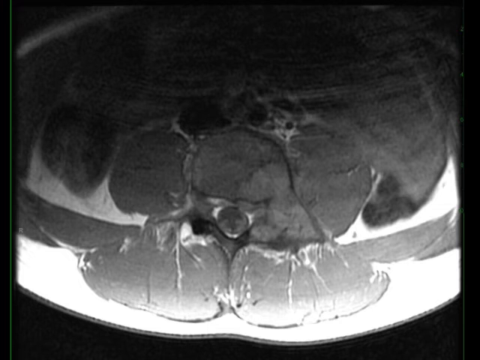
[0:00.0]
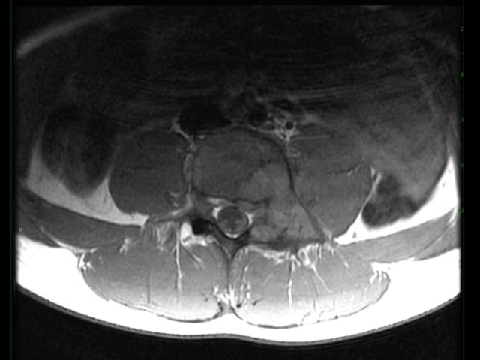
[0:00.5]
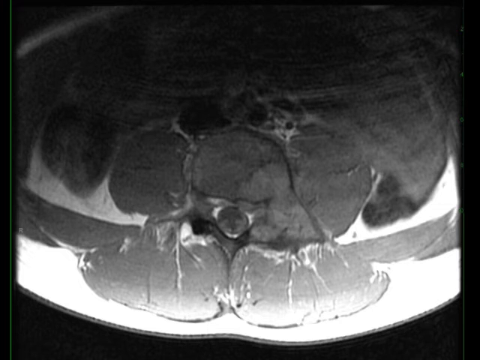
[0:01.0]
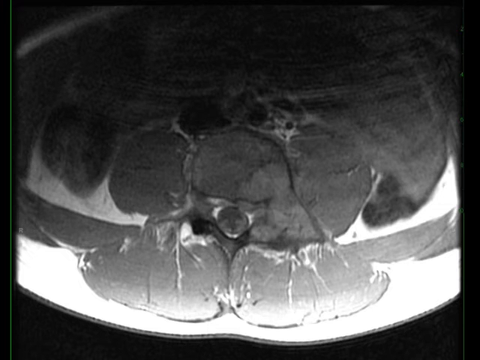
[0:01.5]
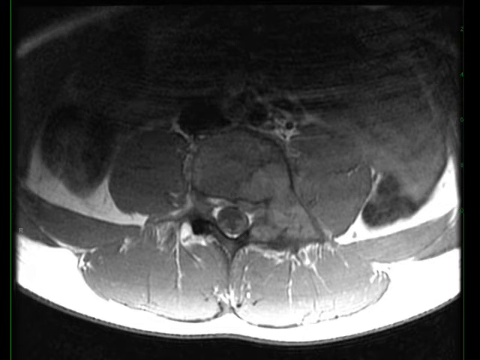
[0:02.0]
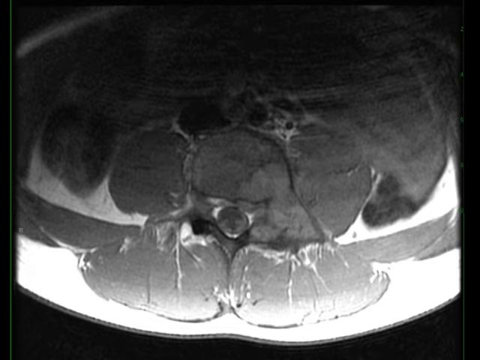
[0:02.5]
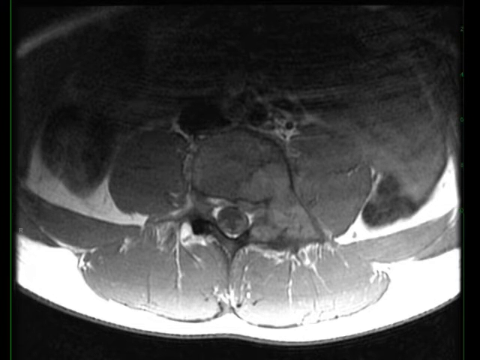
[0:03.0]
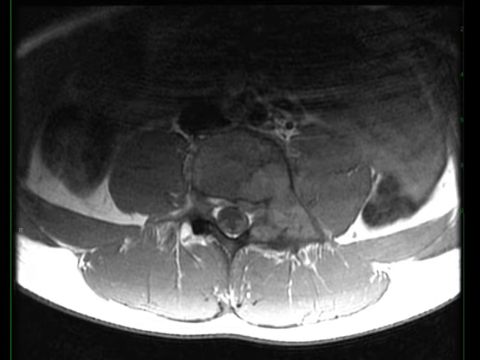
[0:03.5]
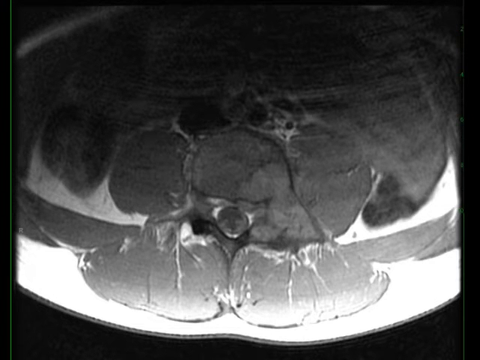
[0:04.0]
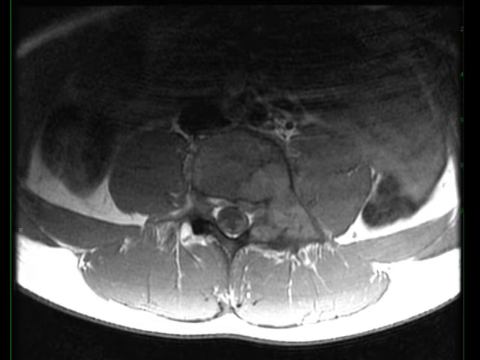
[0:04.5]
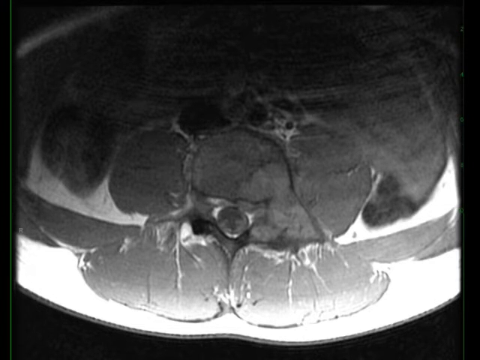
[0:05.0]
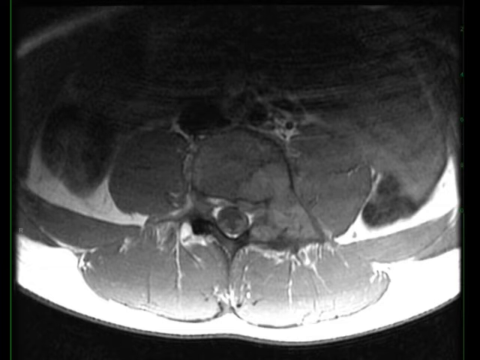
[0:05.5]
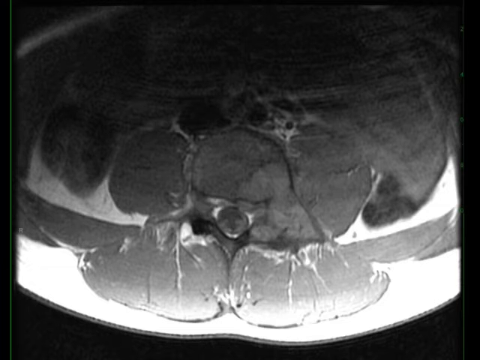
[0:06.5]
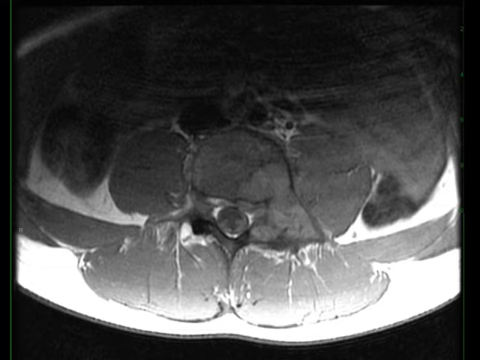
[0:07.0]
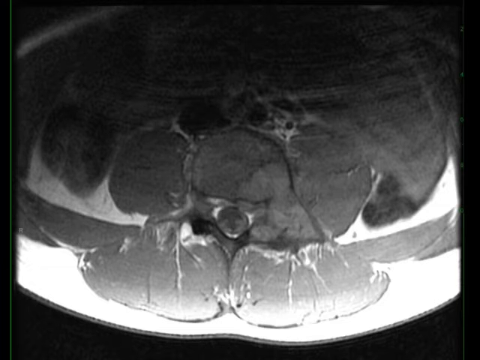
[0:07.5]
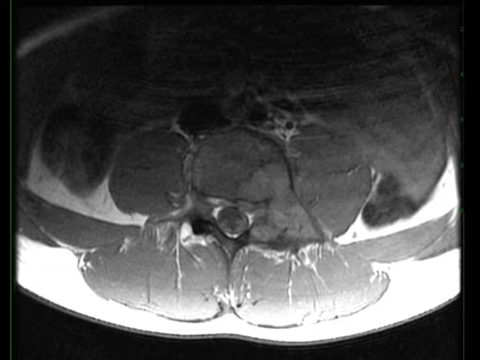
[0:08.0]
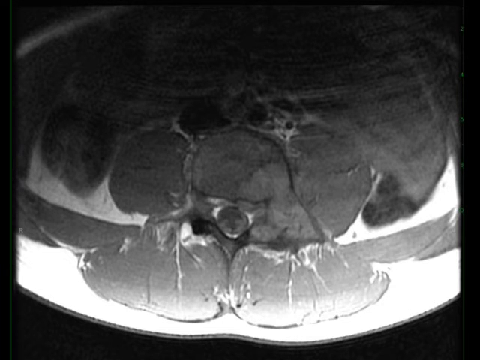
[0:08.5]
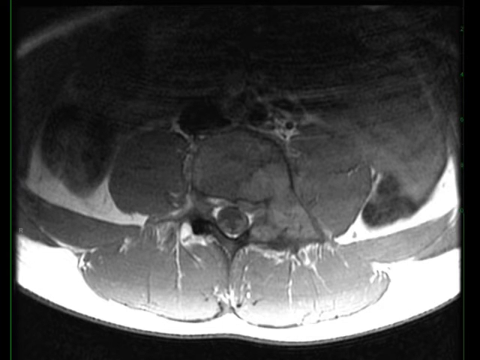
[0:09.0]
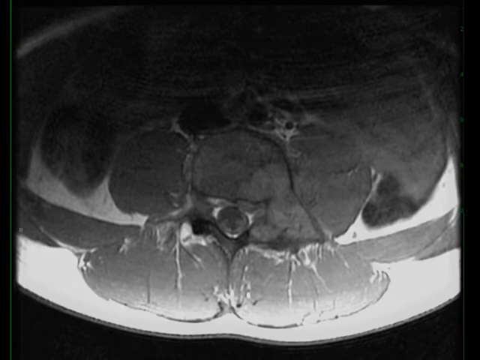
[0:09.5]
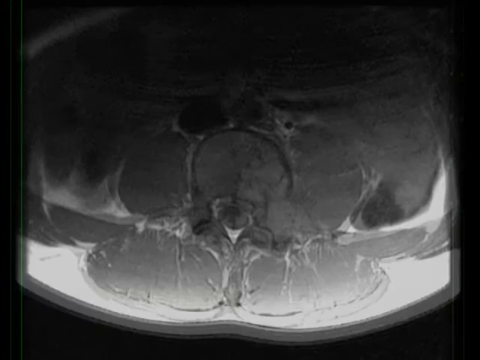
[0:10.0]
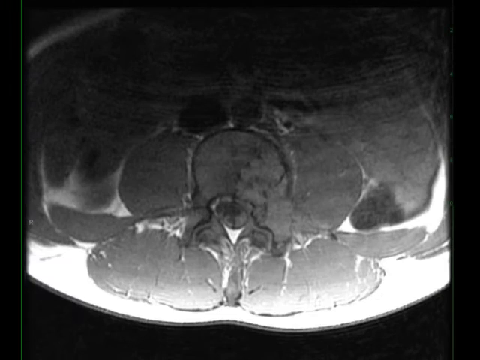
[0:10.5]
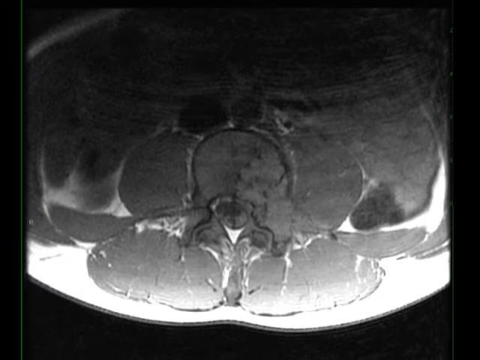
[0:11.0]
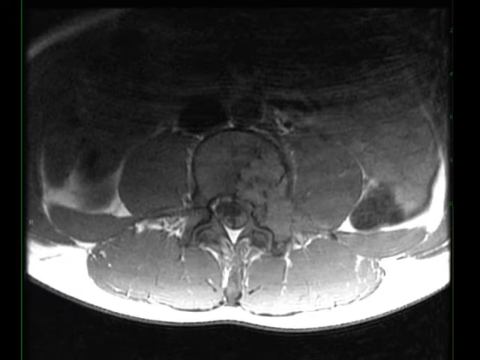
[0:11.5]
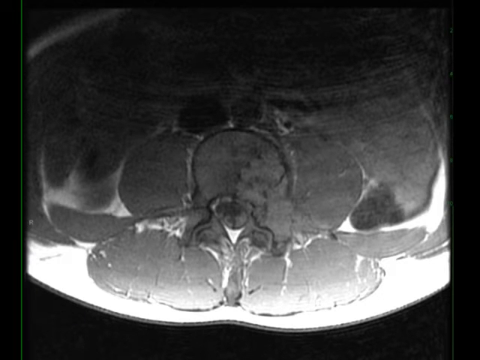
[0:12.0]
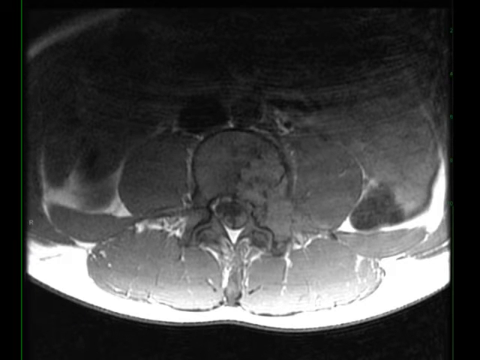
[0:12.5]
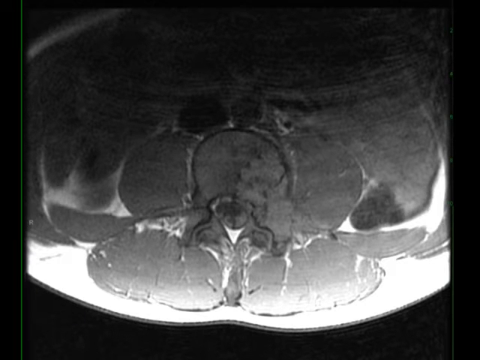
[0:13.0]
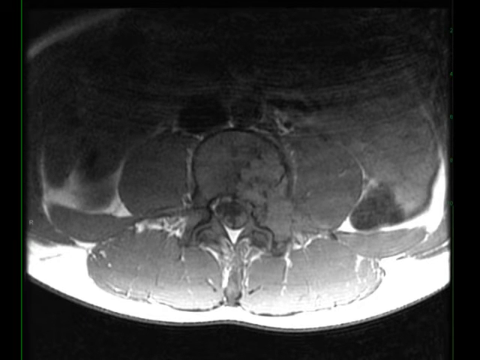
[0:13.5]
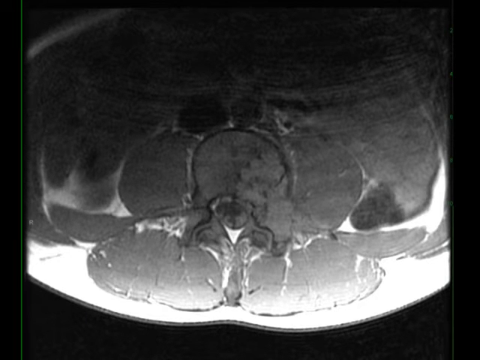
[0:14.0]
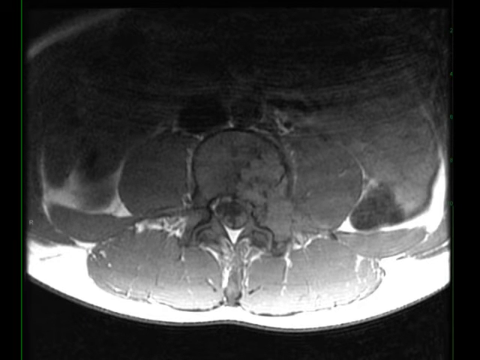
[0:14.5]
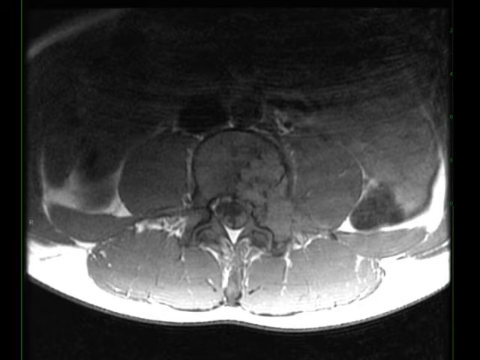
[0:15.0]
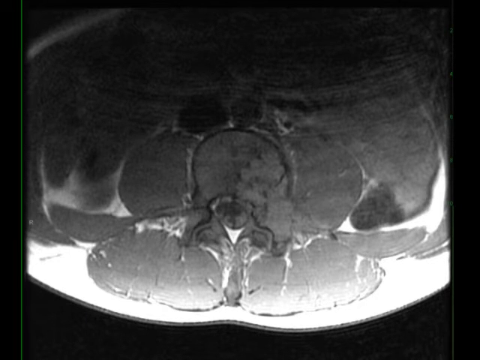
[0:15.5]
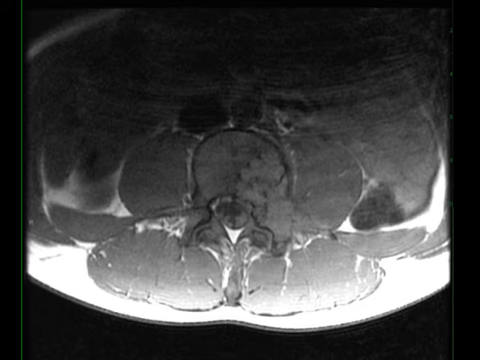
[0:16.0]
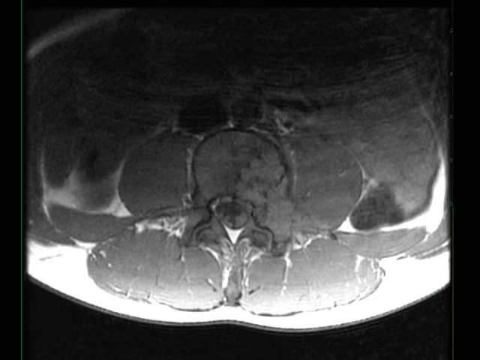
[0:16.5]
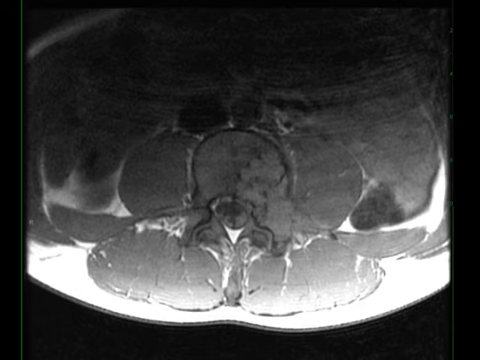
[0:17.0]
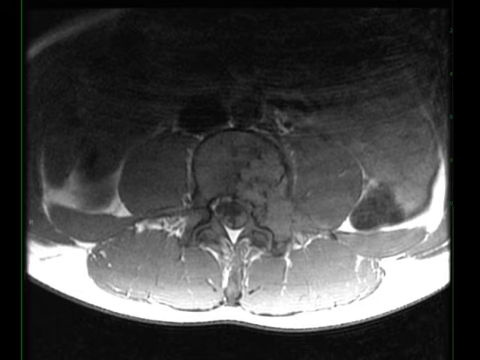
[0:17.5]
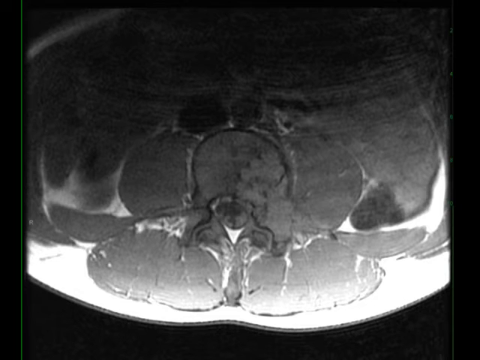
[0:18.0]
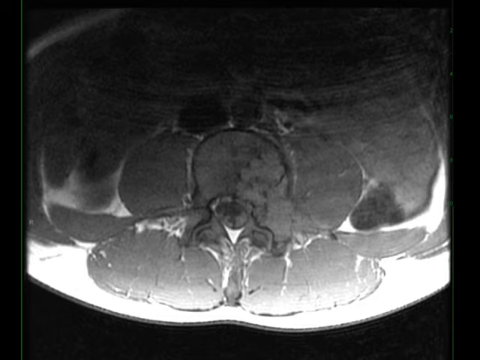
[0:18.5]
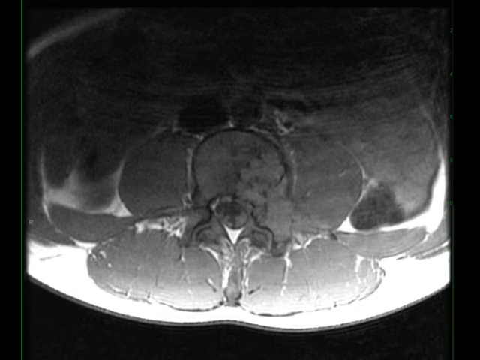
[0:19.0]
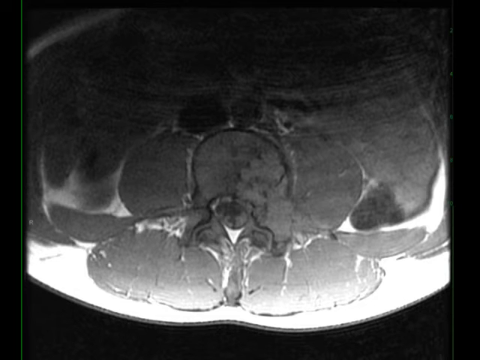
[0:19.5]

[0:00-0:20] The x-ray has a black background. Toward the top of the x-ray is a darker area, and at the top the view slowly moves to show different images and the different angles being looked at. Further down is a lighter gray area with three dark circles, and on the right another dark circle toward the end of the visible area. In the very middle is a round circle with a grayish area covering around it. Light gray areas touch each other toward the bottom middle, with areas going off to each side, covered by a white linear line. Further down there are multiple areas: one major area at the top, then three divided segmental areas branching down. As the view changes to the next screen, it appears to have moved; a lighter area is visible to the left, and the areas at the bottom middle are more distinguishable.